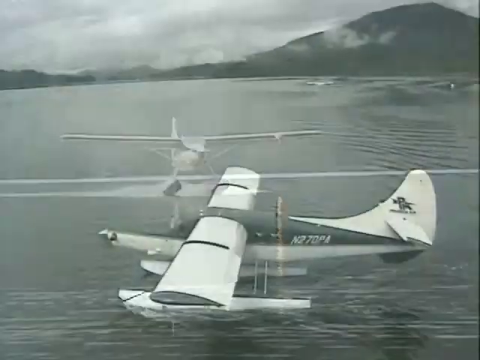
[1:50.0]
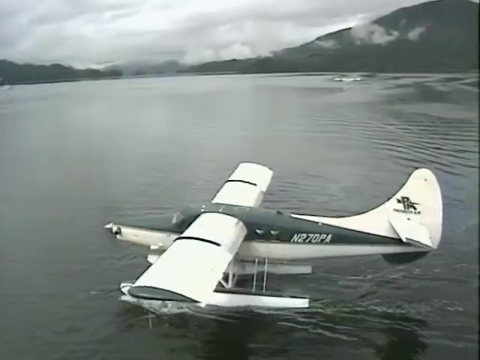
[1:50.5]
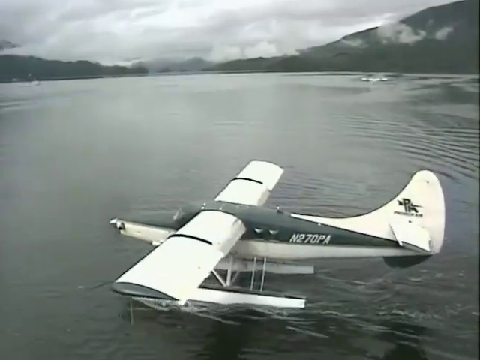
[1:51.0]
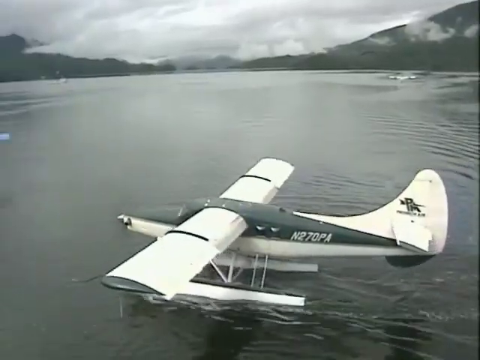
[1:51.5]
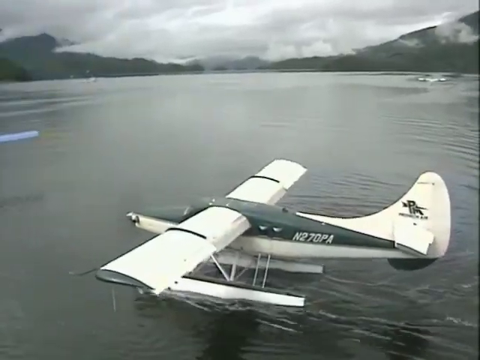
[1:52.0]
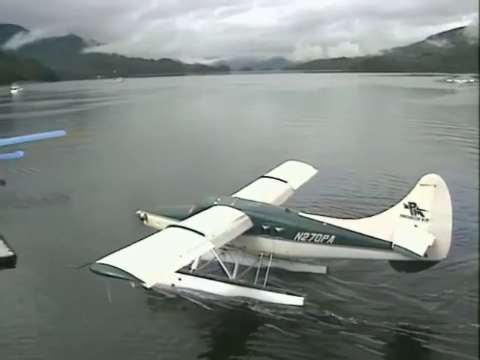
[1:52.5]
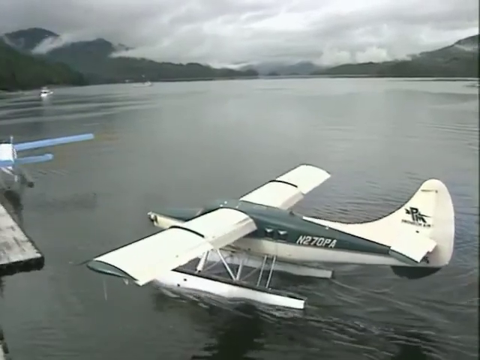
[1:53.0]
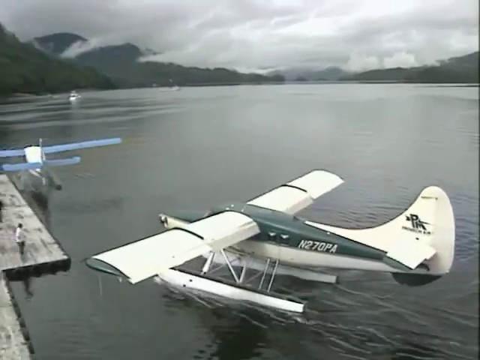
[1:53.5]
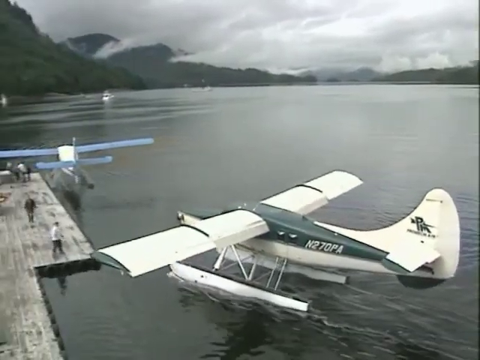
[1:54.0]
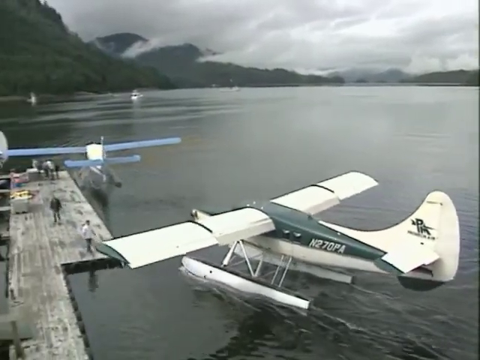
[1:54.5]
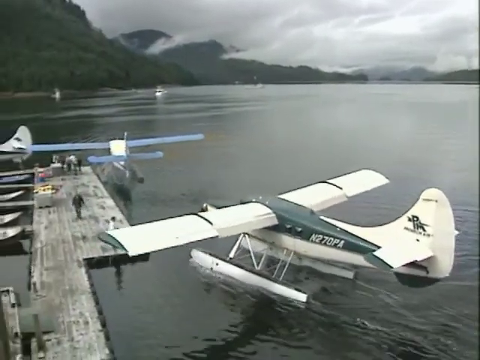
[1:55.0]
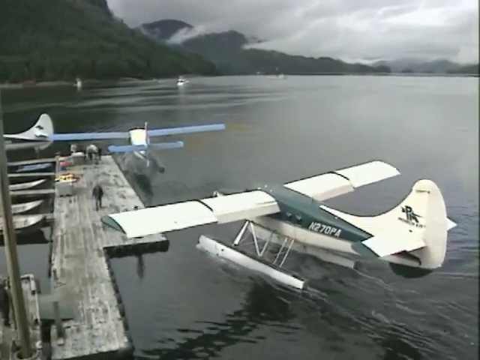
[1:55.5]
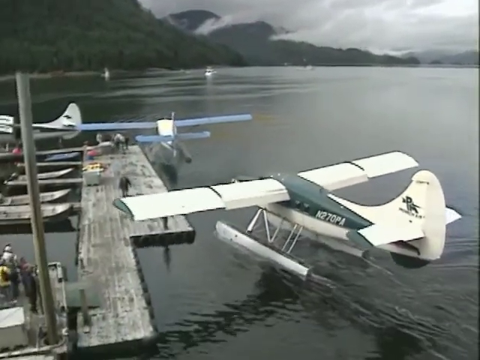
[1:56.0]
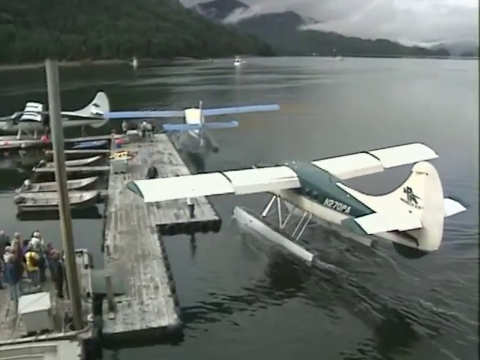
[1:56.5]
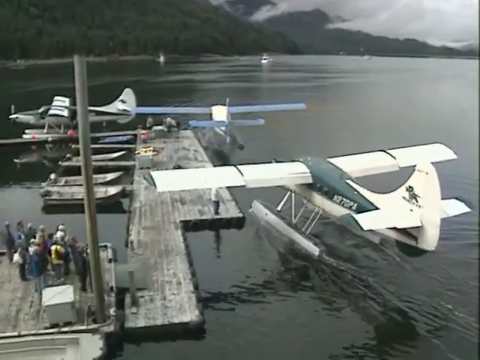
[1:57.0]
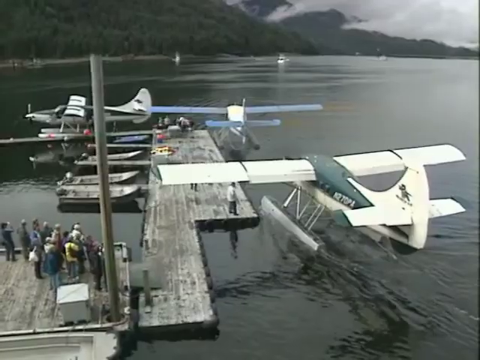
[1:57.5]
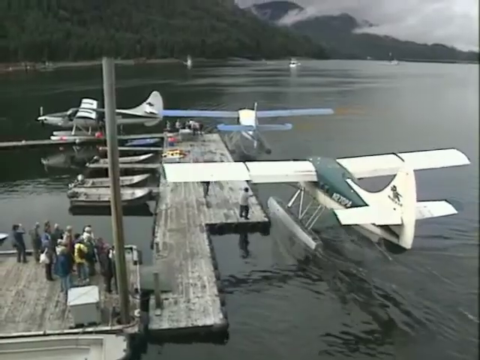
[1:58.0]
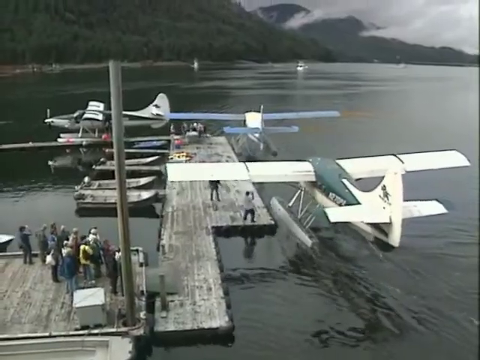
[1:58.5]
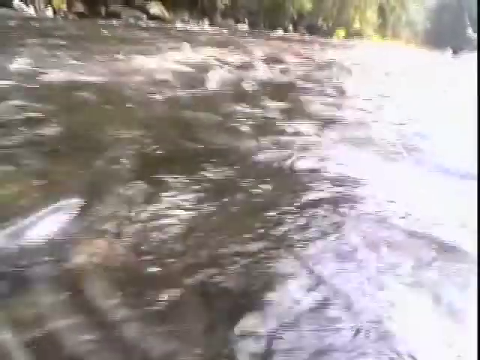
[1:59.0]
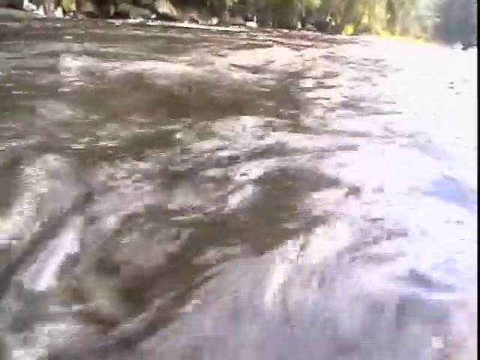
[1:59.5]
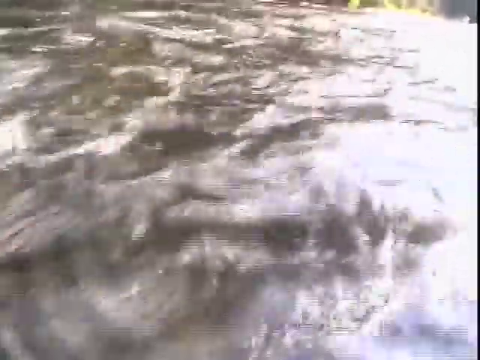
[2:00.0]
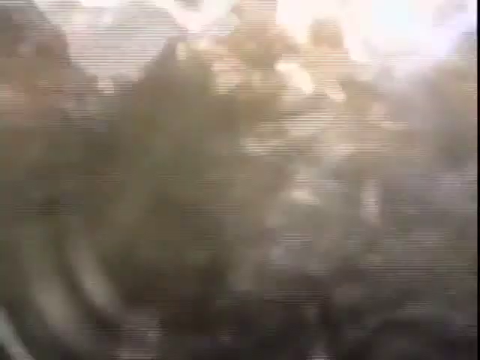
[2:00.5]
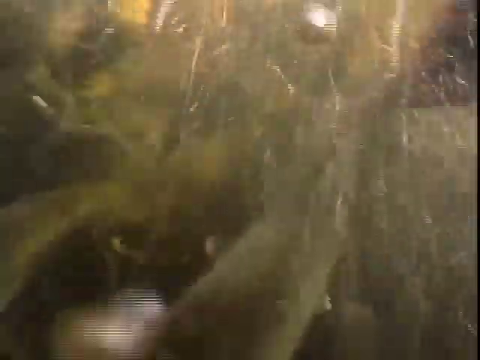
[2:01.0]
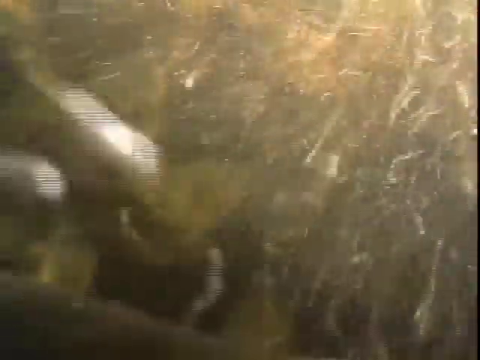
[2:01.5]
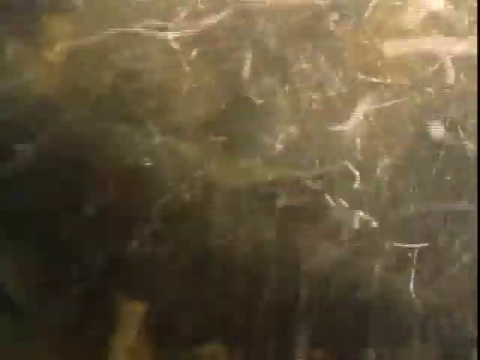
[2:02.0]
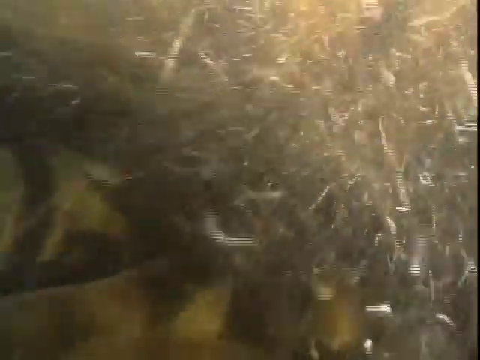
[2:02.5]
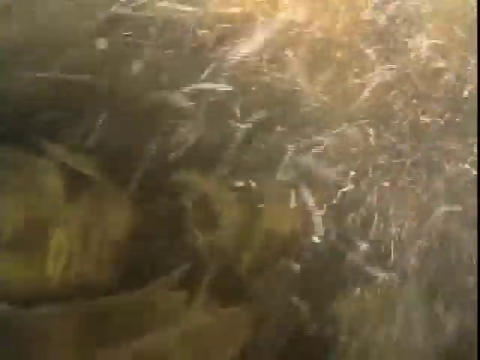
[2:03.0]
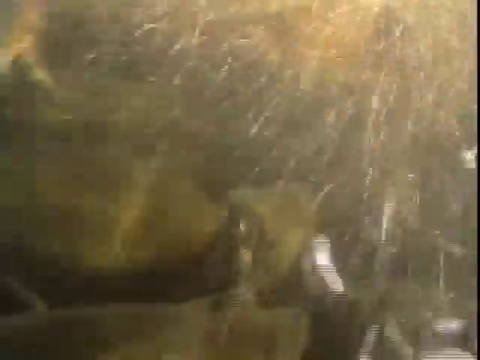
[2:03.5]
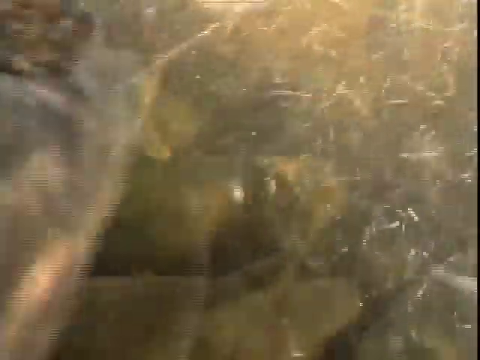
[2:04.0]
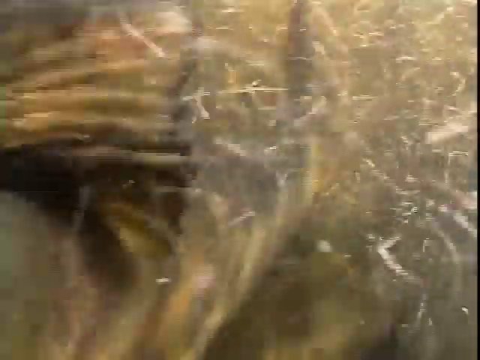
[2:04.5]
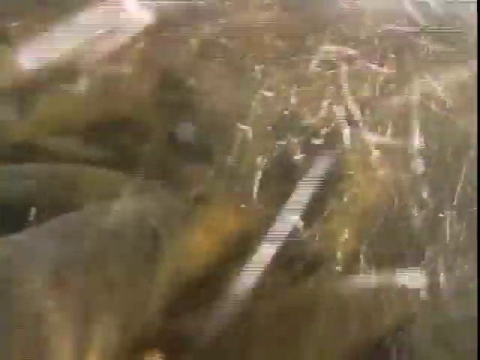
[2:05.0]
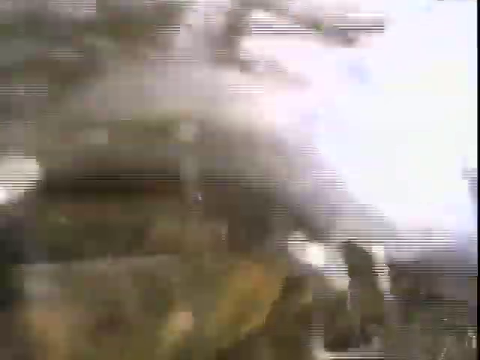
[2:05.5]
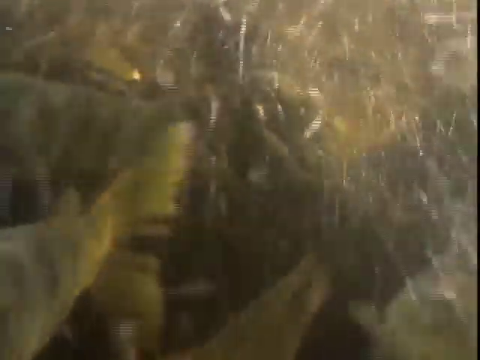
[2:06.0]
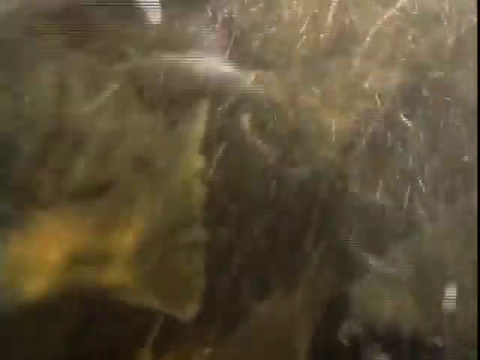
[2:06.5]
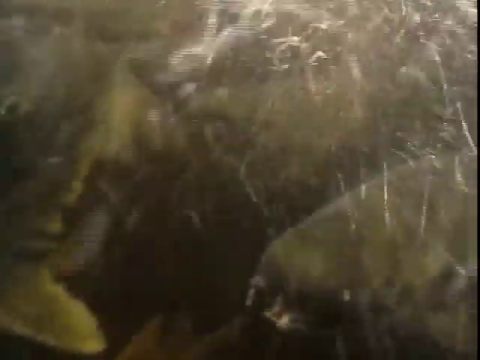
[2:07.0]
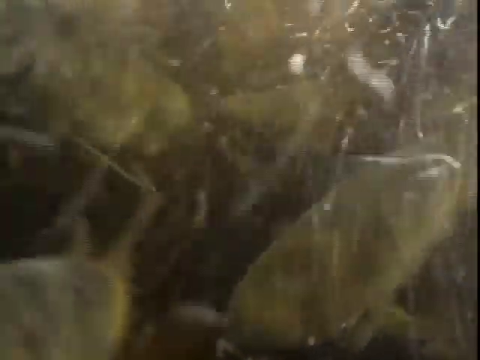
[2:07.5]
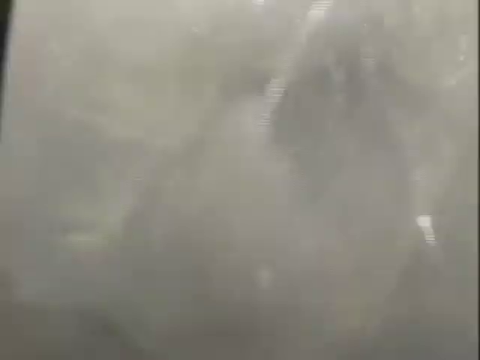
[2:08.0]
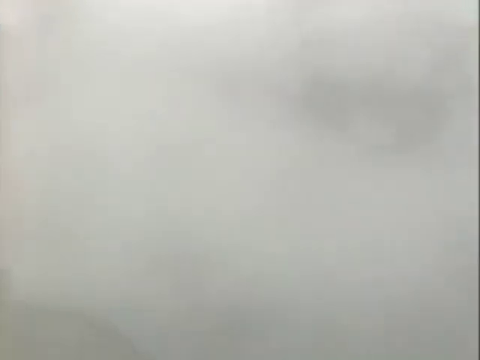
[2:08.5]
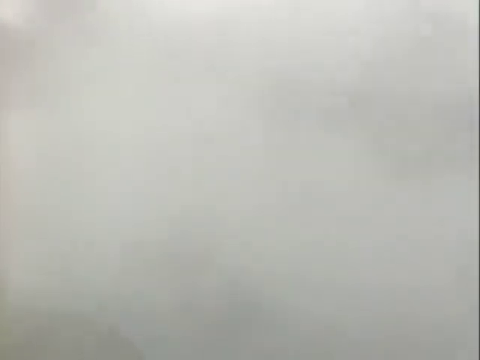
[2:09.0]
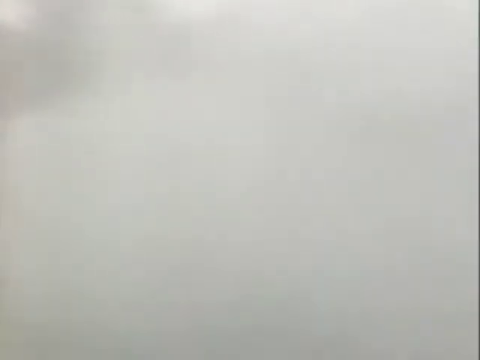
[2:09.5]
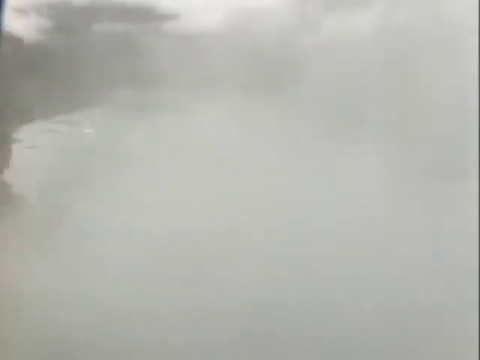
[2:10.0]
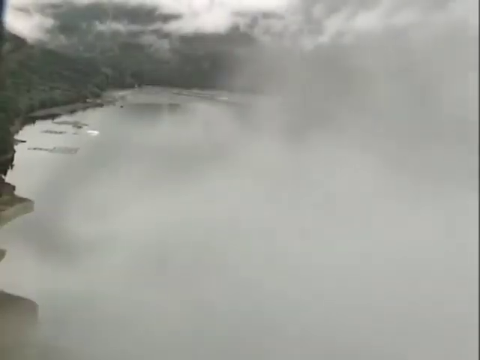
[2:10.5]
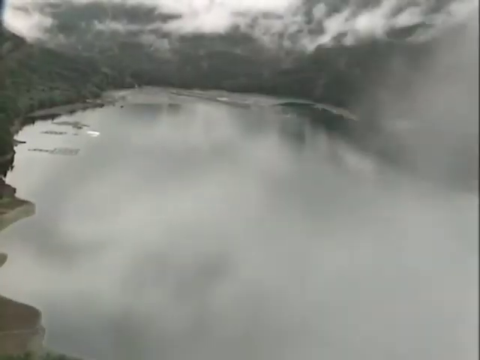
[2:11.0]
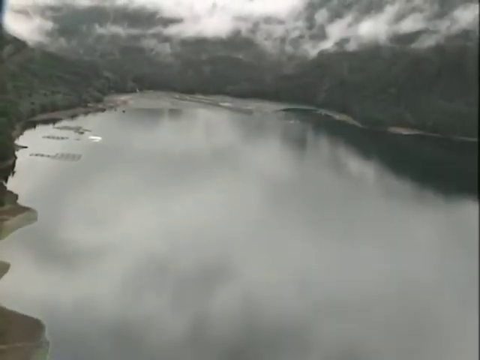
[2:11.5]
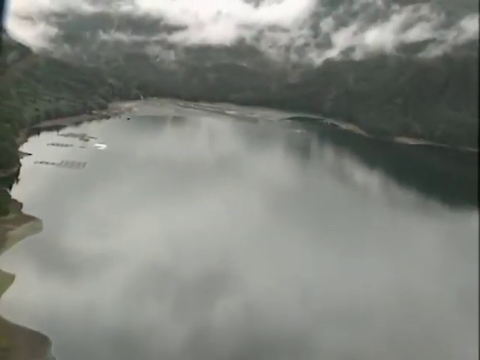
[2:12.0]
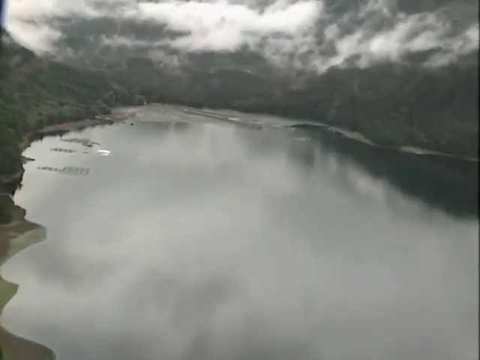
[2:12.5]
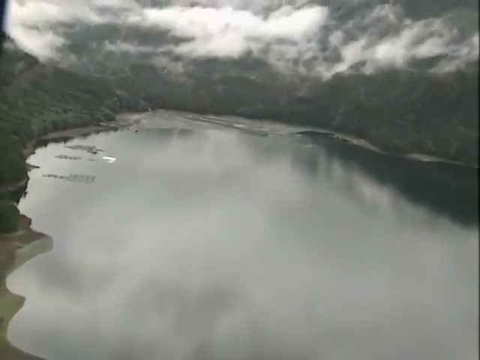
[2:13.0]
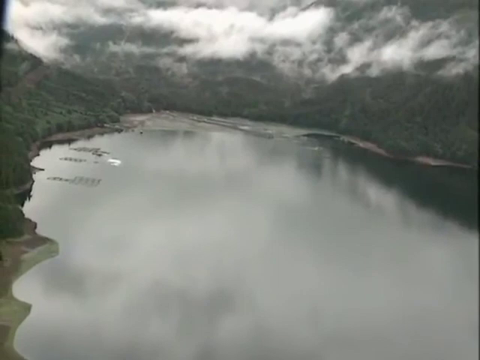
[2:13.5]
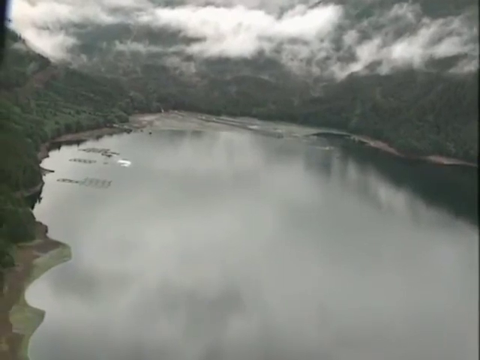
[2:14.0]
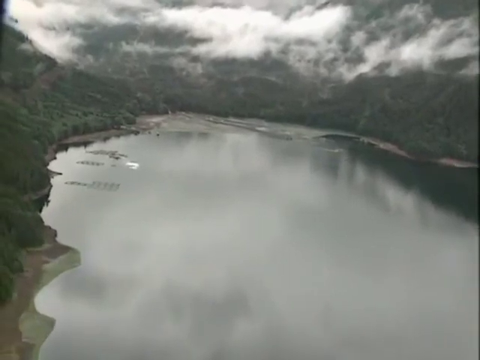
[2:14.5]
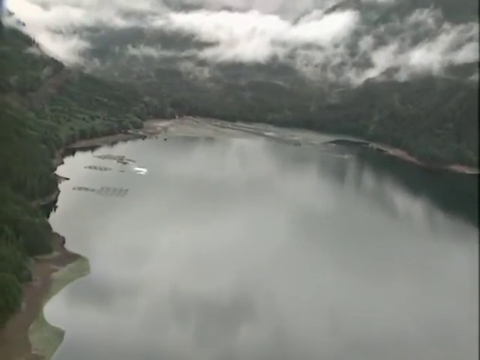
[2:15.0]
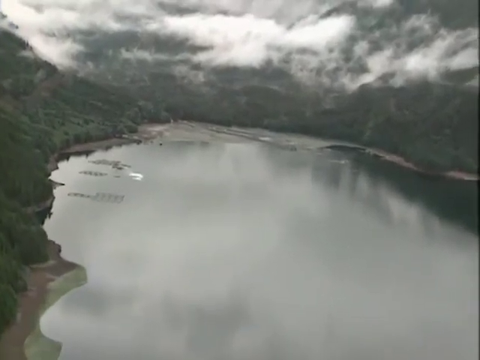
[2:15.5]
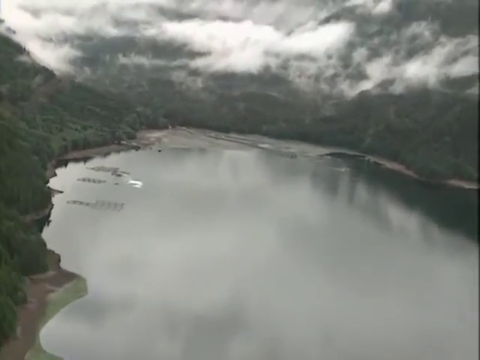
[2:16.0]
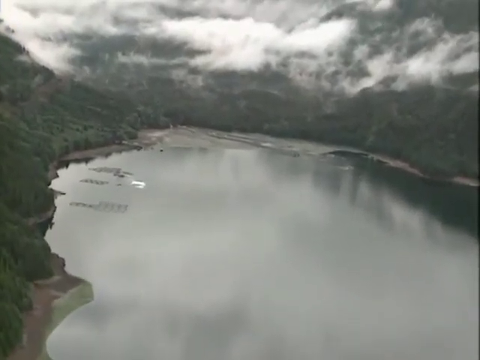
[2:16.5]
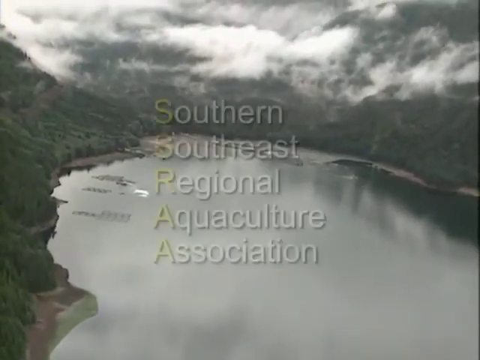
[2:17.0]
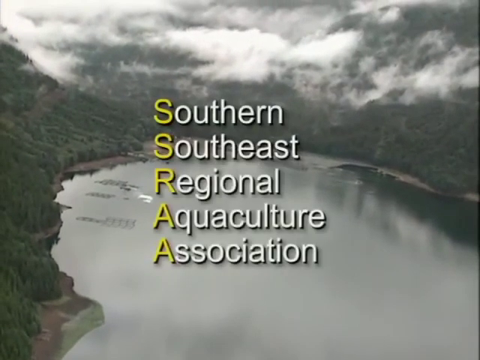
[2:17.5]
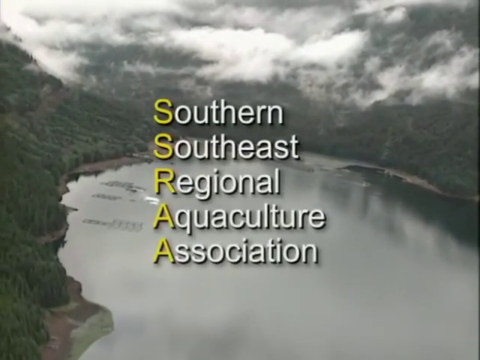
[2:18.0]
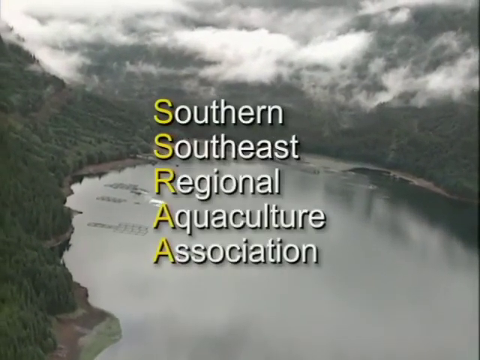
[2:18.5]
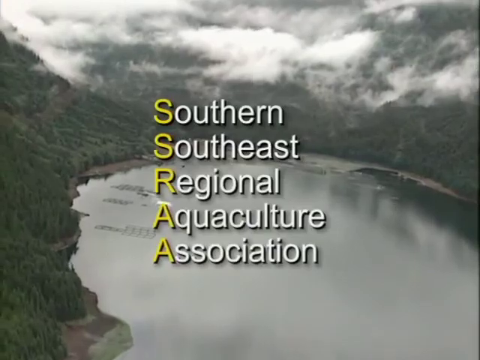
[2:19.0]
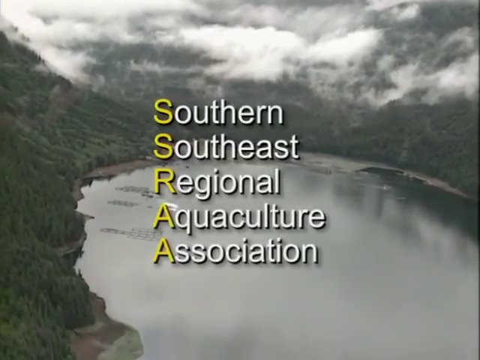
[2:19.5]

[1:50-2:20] A plane floats on the water in the middle of a lake, seen in an aerial shot from the upper left. The plane is mostly white with a blue stripe in the center. In the background are mountains on the shore, filled with trees. The camera rotates slightly around to the back of the floating plane, which is moving toward a wooden dock on the lower left side of the screen. Another plane is already docked near the left side of the center of the screen. The plane in front has blue wings with a white body and is seen slightly from the back, showing its top. About five people are on the docks on the upper right; the docks are a vertical rectangular shape that go downward to the lower left corner of the screen, where about 20 people stand in a crowd looking at the planes coming in. Then a close-up shows bubbling water from a river; the camera hovers over it and then goes beneath the surface, showing a mass of darker gray fish swimming in brown water, with their fins and faces visible. Next, what first looks like a very smoky shot, with smoke covering the camera lens, turns out to be an aerial shot from the sky looking down on a lake surrounded by hills filled with green trees, with white clouds above the hills. Five words appear in a column on the screen: "Southern", "Southeast", "Regional", "Aquaculture", "Association", with the first letter of each word highlighted yellow.